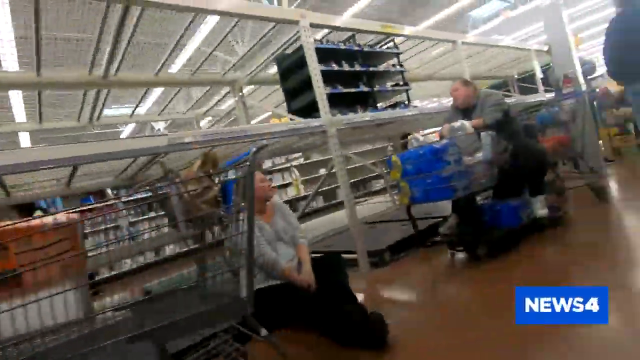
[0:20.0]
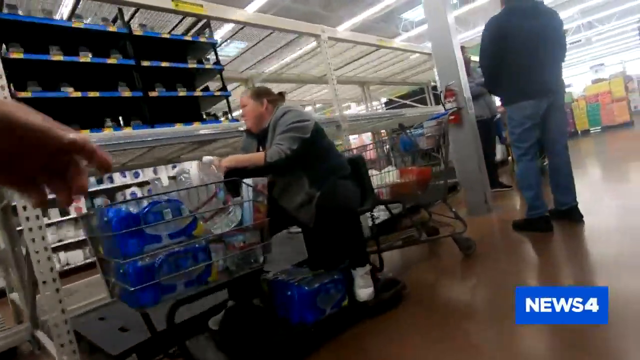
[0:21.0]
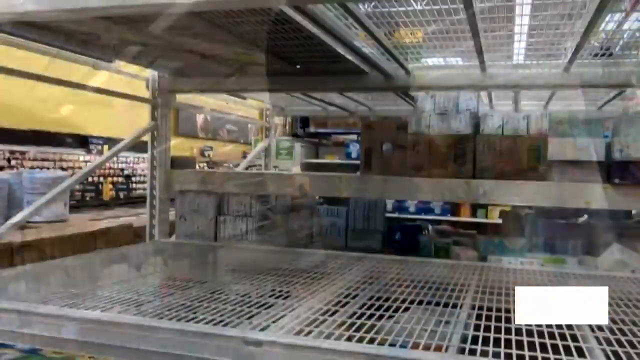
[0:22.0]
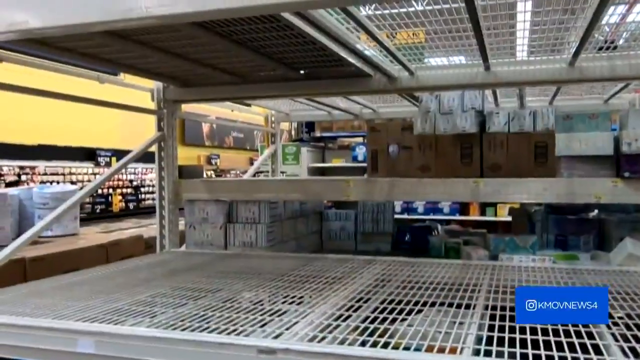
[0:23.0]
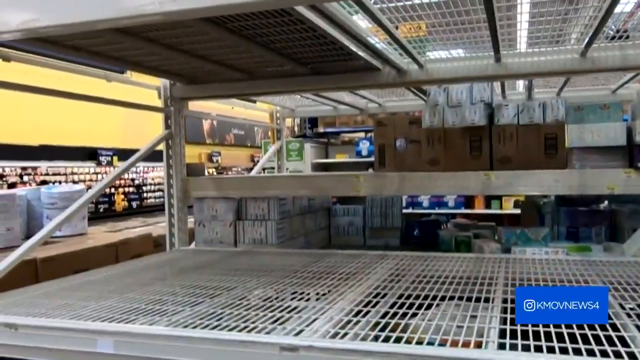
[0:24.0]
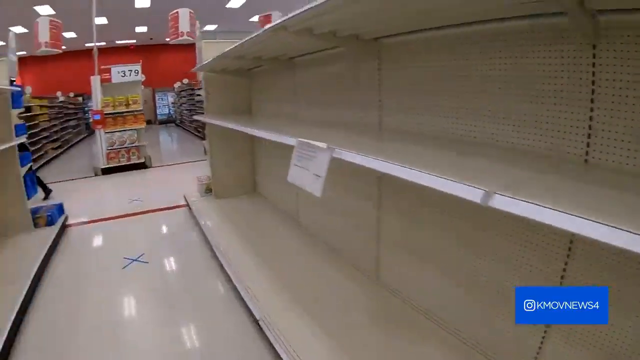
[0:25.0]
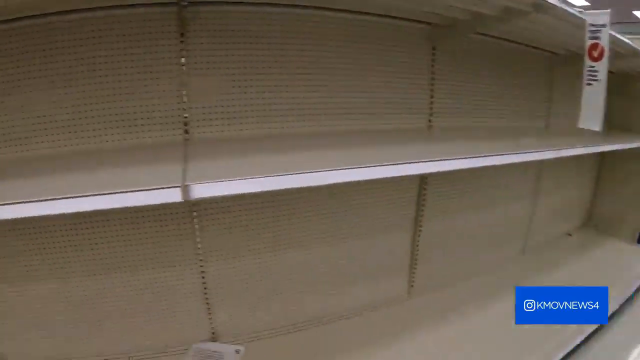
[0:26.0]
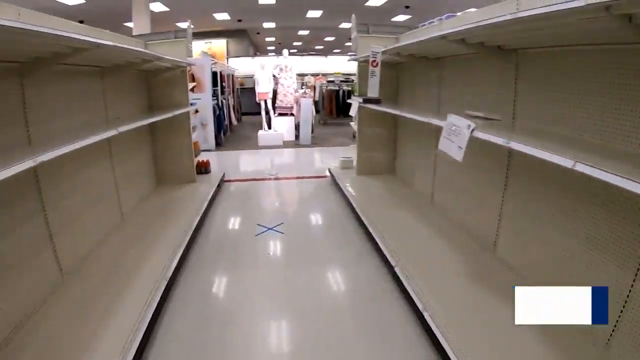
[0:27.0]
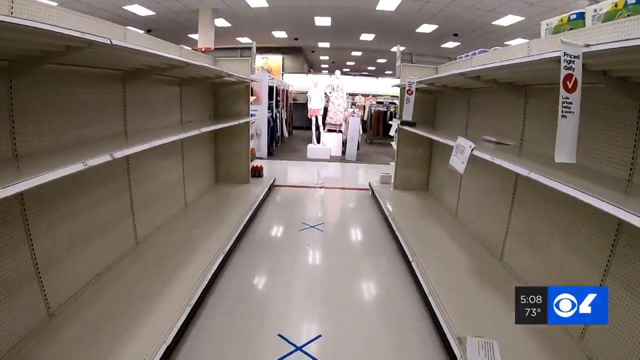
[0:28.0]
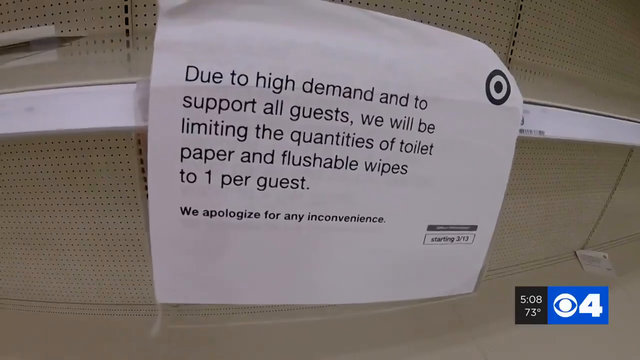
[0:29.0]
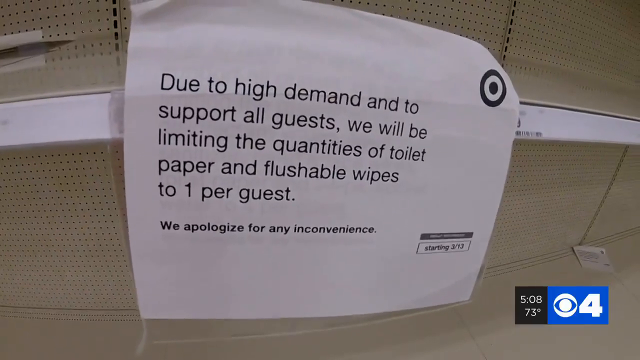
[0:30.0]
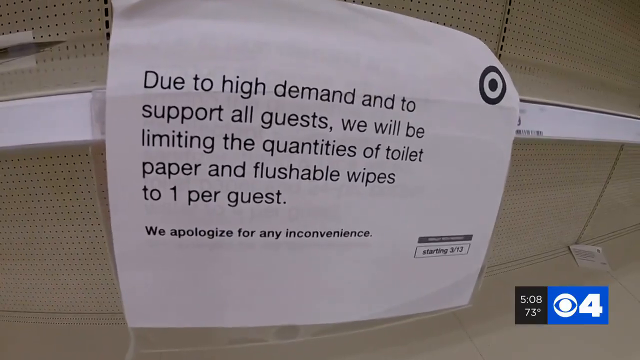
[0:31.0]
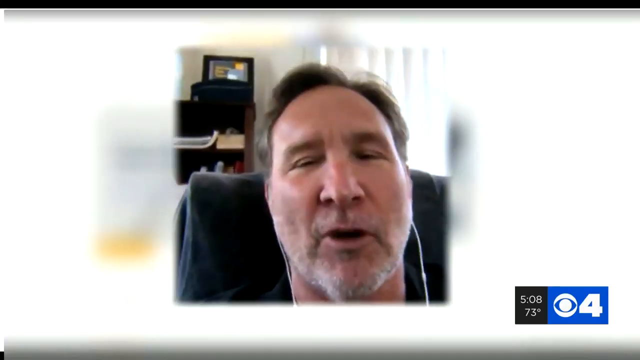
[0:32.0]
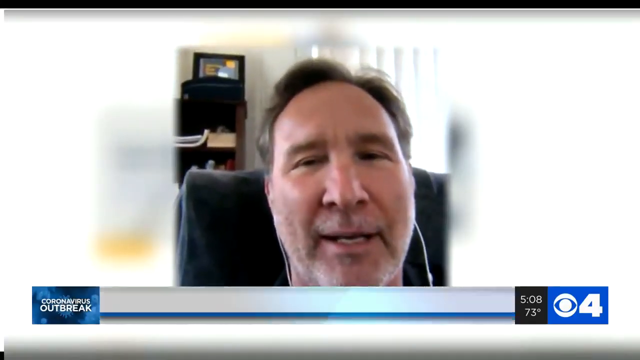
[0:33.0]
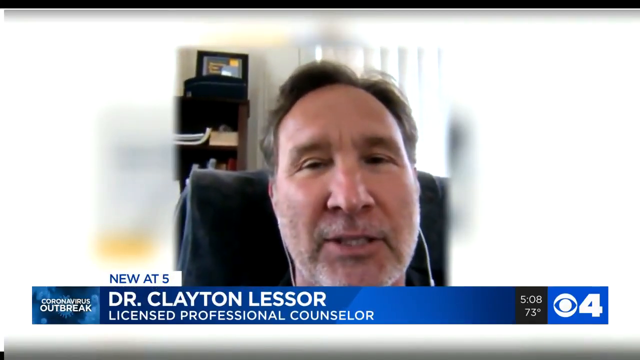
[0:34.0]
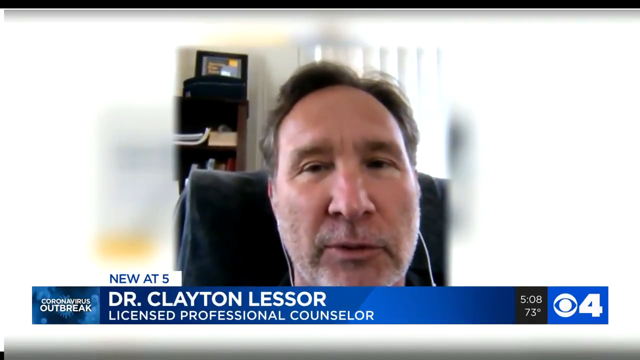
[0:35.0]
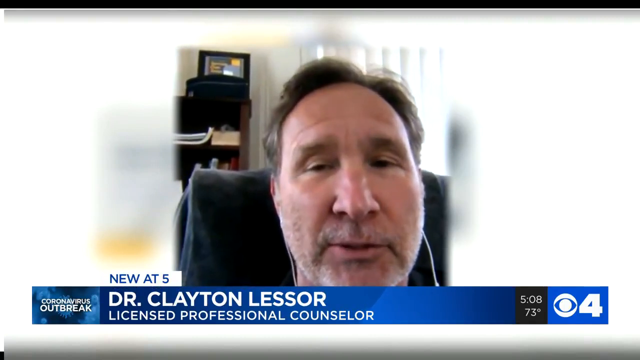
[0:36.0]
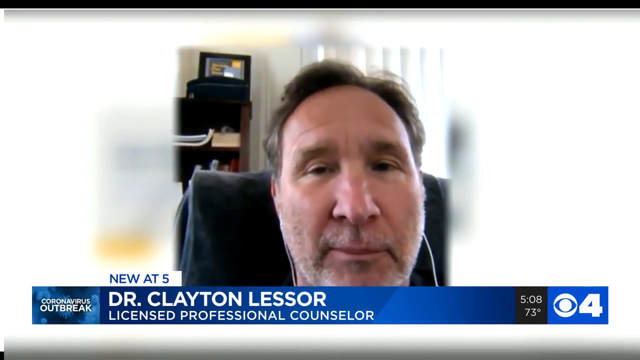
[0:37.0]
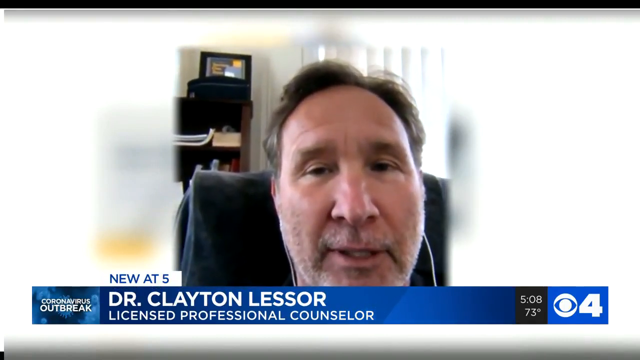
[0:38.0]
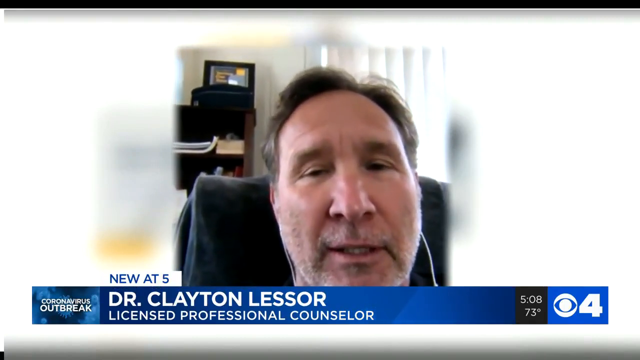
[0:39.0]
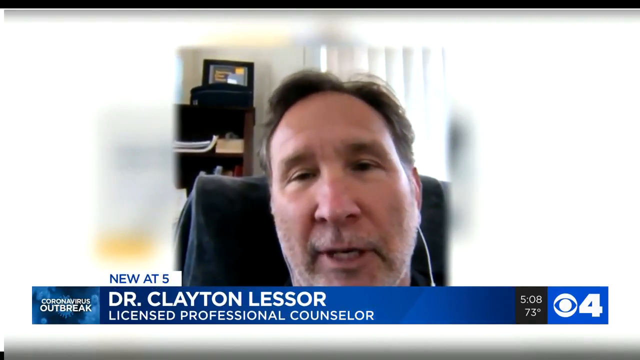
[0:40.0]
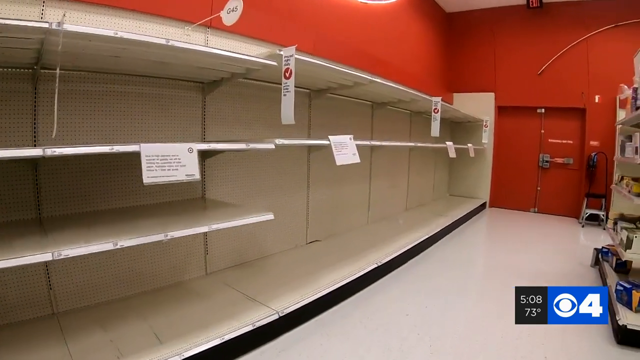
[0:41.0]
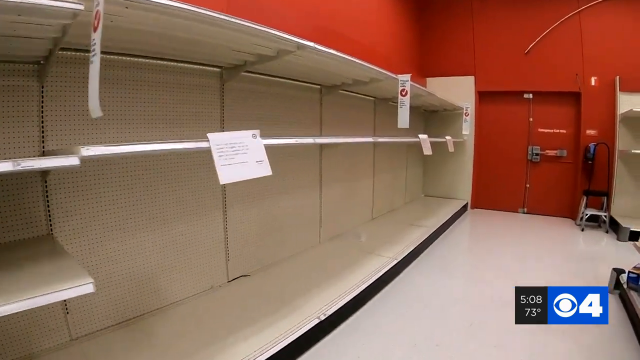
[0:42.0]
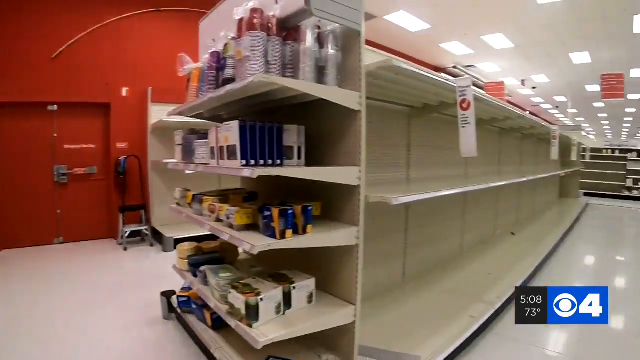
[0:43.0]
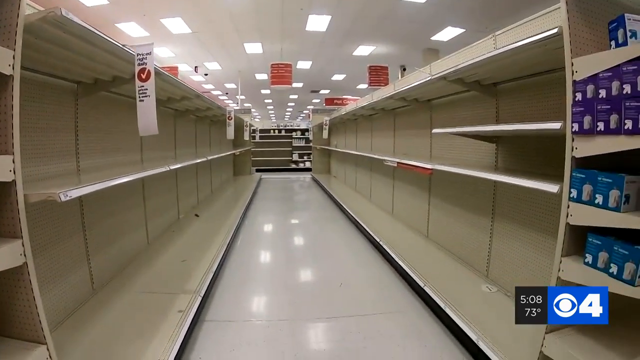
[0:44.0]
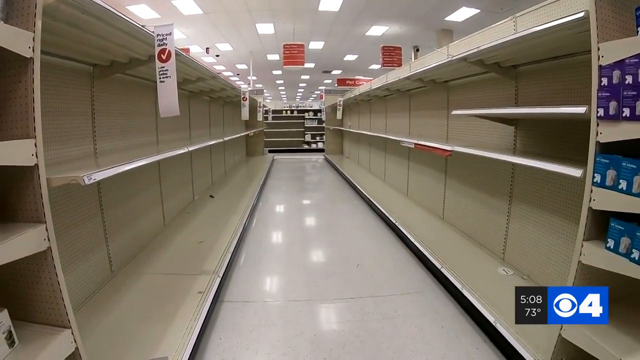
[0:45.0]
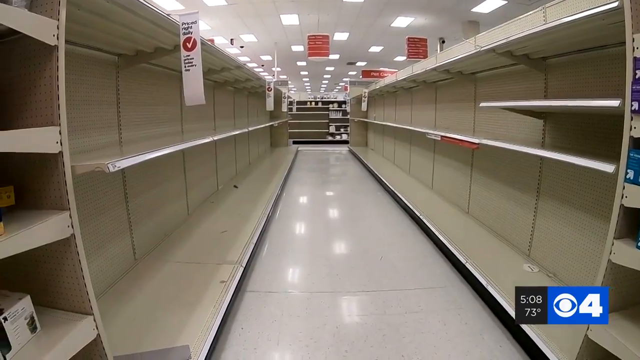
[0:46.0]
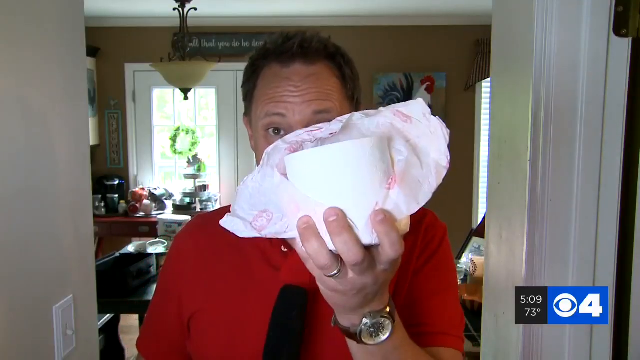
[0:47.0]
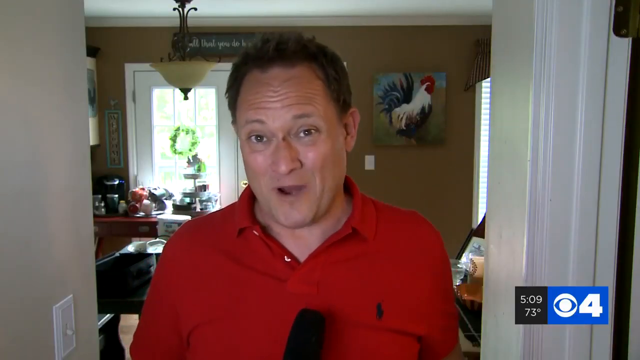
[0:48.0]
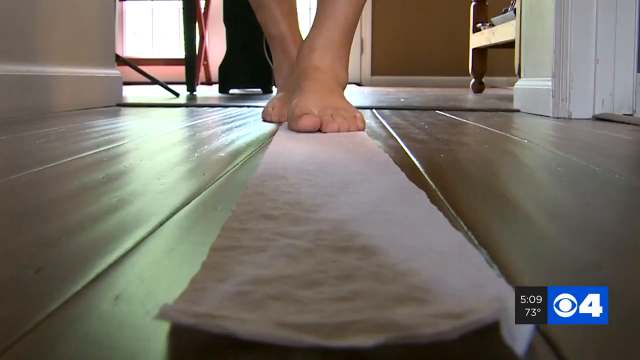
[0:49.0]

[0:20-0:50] Inside a store, a woman sits on the floor while waiting in line to be checked out; she wears a shirt with black pants and glasses. The view moves to the store's shelves, in a store that looks kind of like a warehouse store, and some of the shelves are completely bare, as are other shelves shown after them. There are X's on the floor. A sign with a Target logo, suggesting the store is Target, reads "due to high demand and to support all guests. We will be limiting the quantities of toilet paper and flushable wipes to one per guest". Next comes a video of Dr. Clayton Lesser, a licensed professional counselor, apparently on a Zoom call or something similar. The video then shows shelves at Target, many of them bare, followed by a Caucasian male newscaster in a red collared polo shirt holding up some toilet paper.